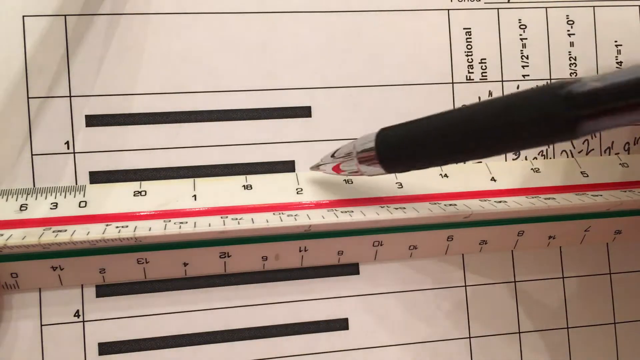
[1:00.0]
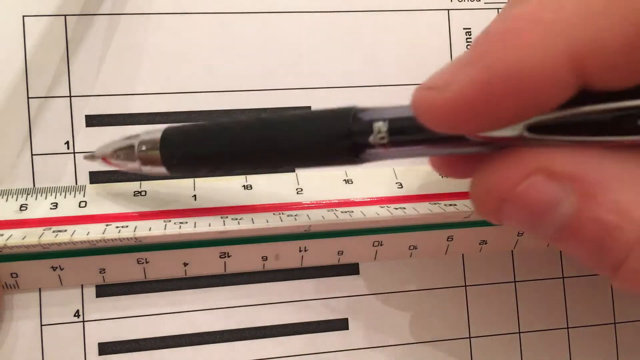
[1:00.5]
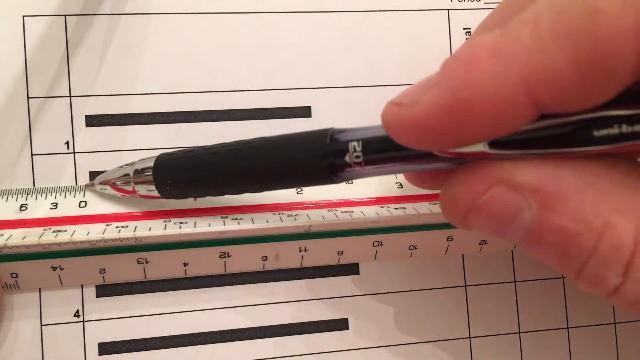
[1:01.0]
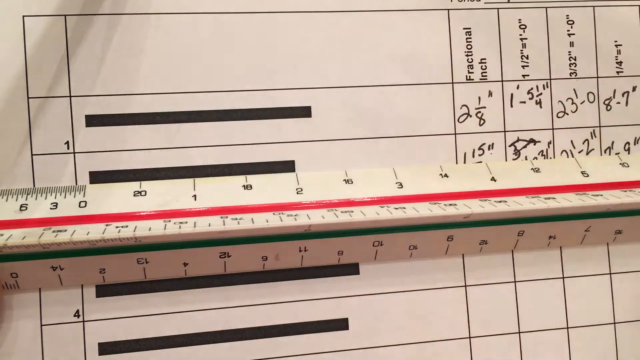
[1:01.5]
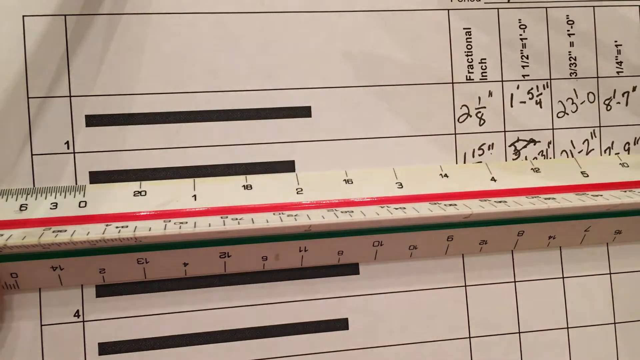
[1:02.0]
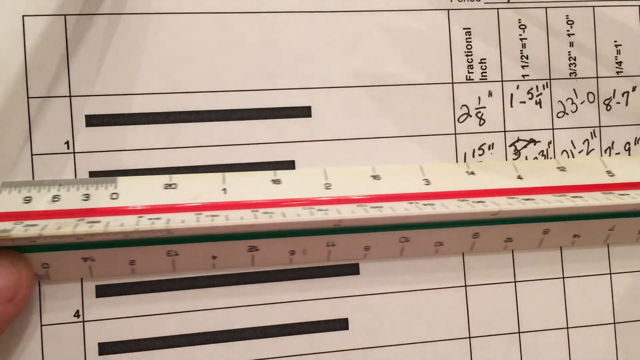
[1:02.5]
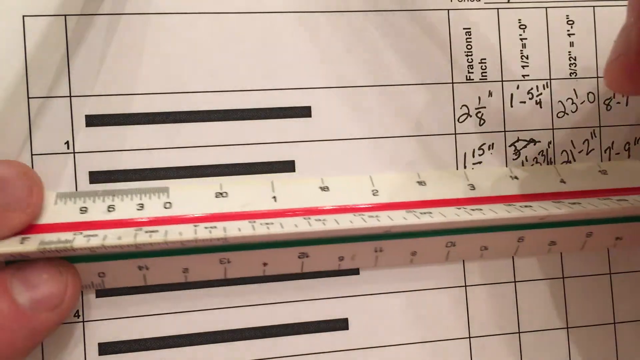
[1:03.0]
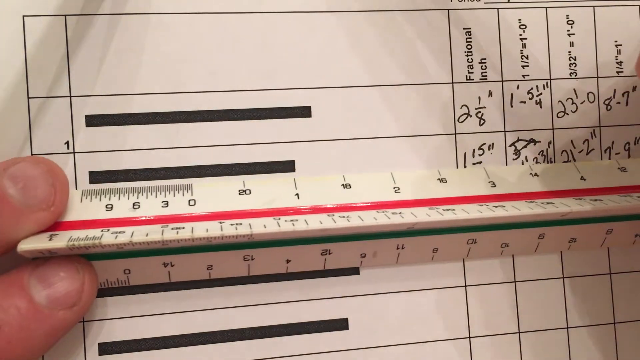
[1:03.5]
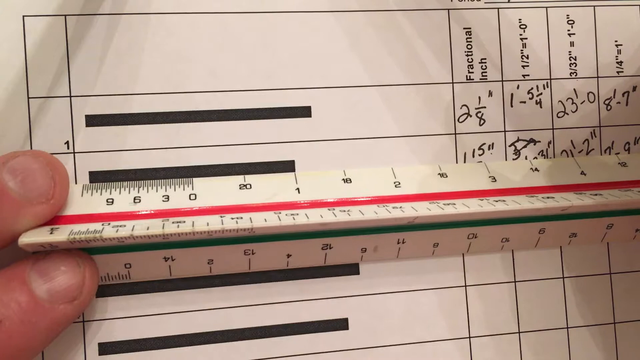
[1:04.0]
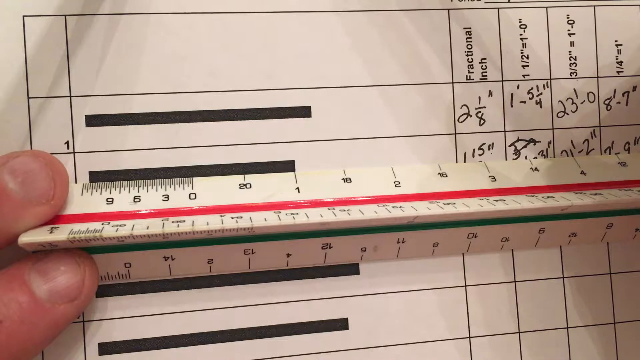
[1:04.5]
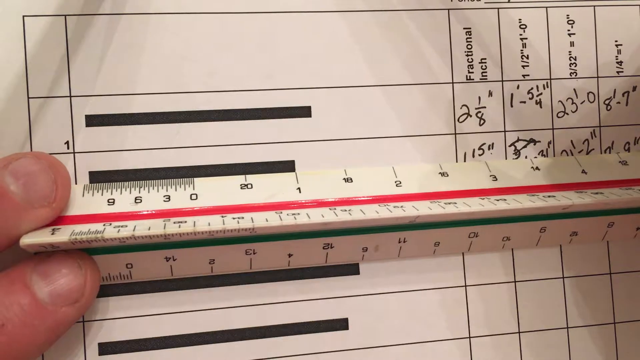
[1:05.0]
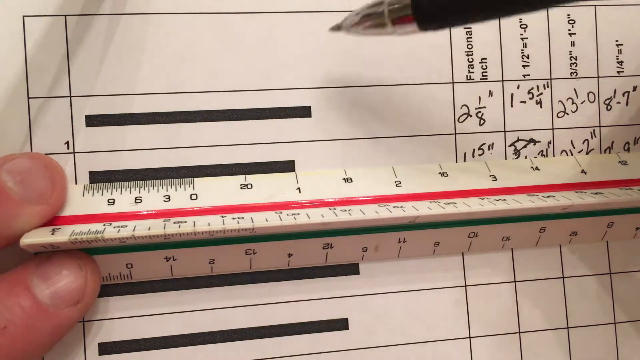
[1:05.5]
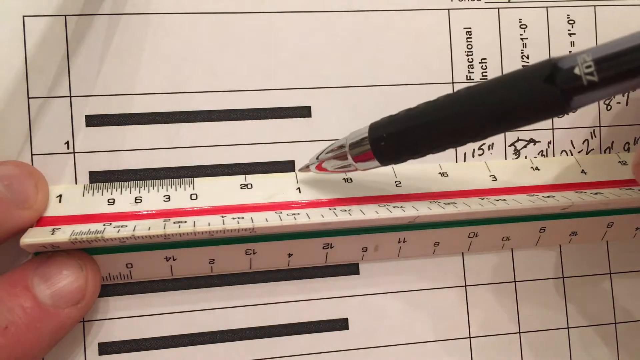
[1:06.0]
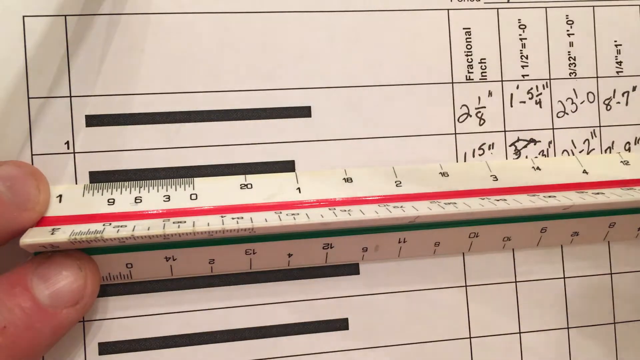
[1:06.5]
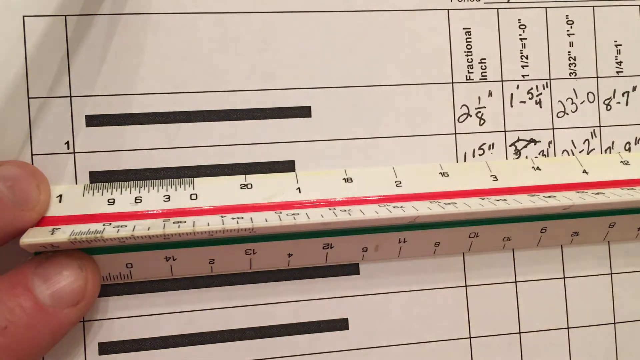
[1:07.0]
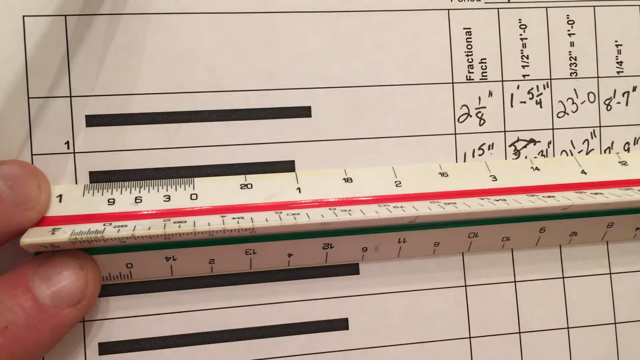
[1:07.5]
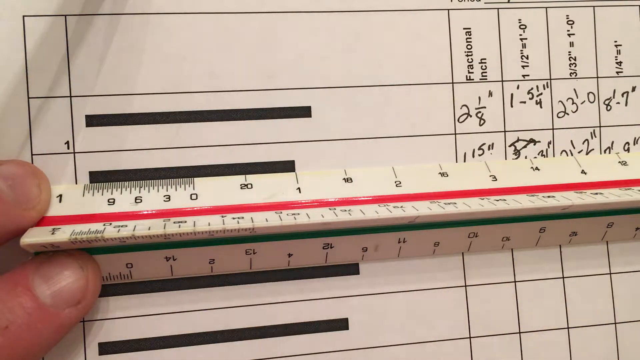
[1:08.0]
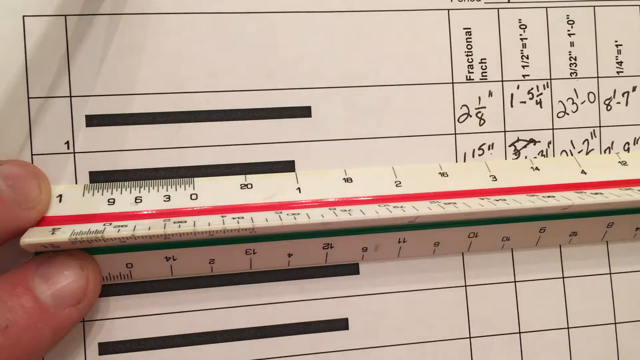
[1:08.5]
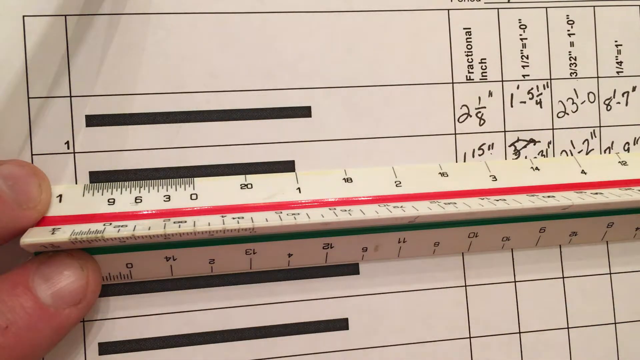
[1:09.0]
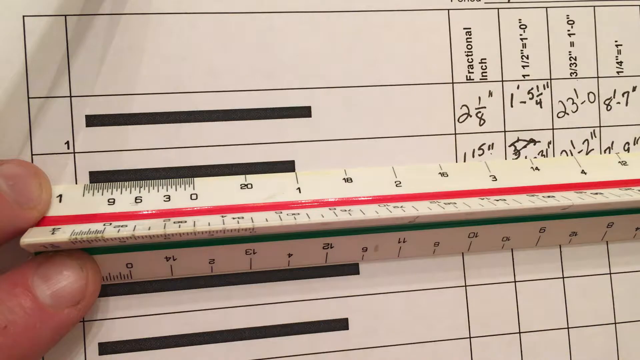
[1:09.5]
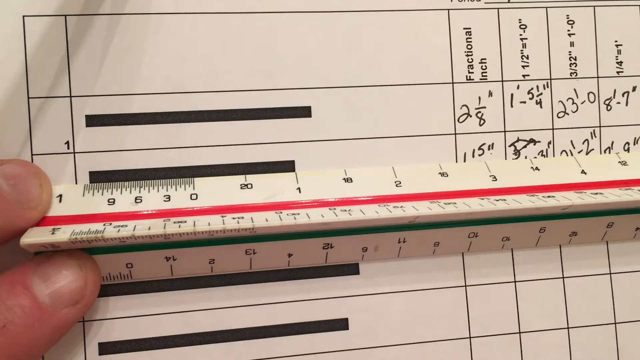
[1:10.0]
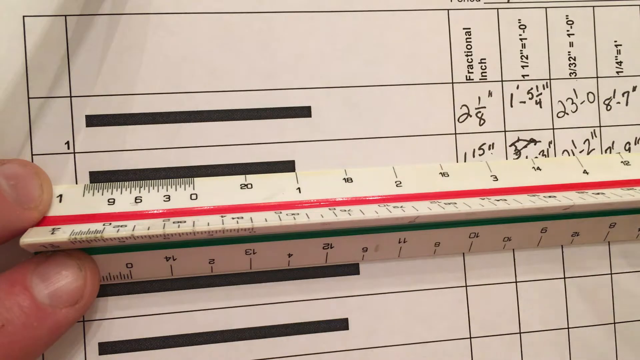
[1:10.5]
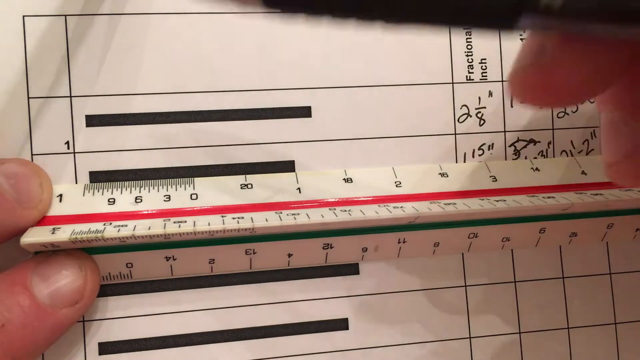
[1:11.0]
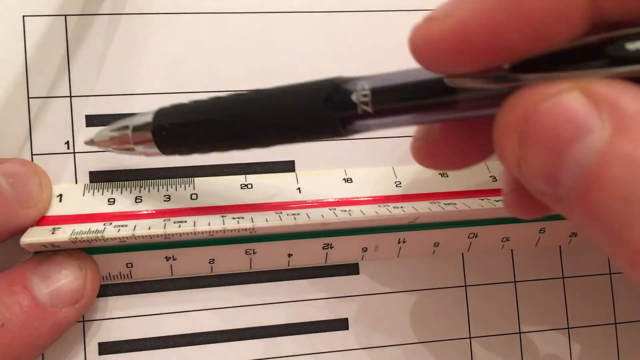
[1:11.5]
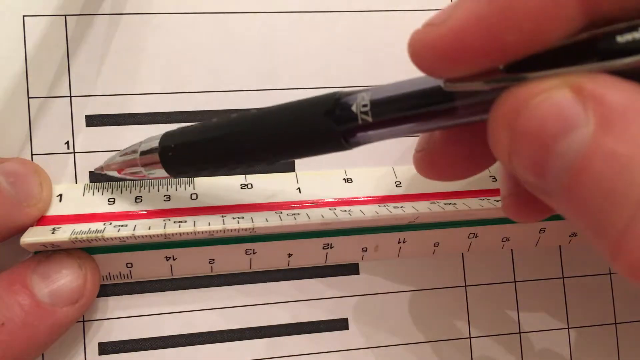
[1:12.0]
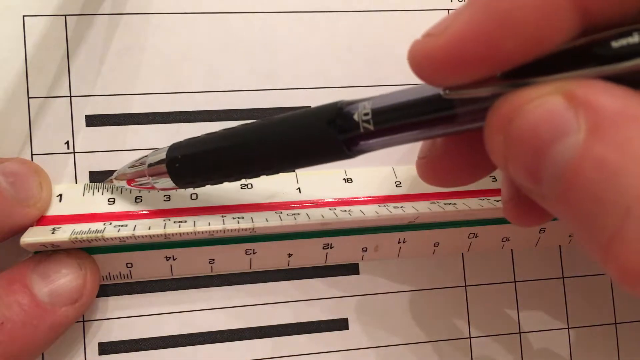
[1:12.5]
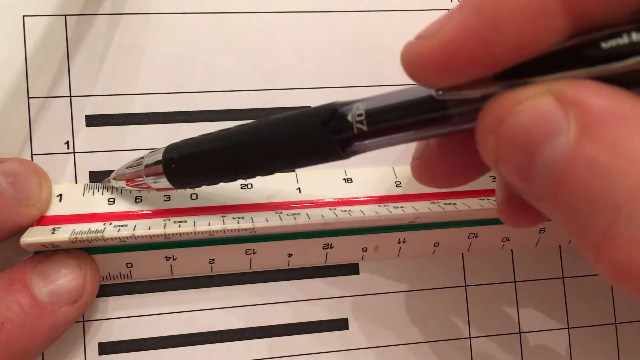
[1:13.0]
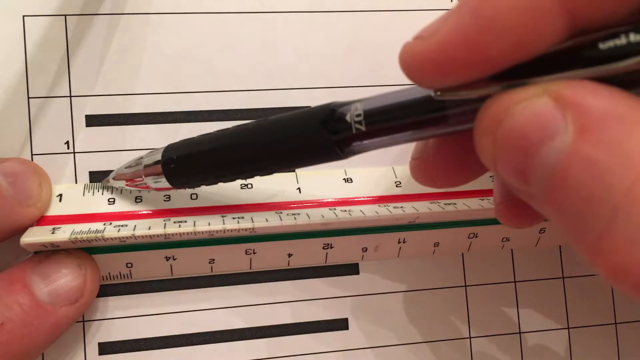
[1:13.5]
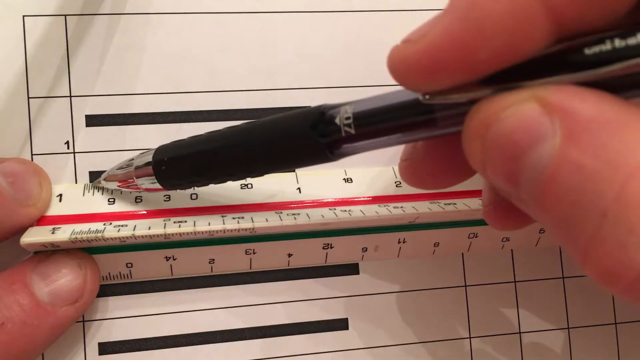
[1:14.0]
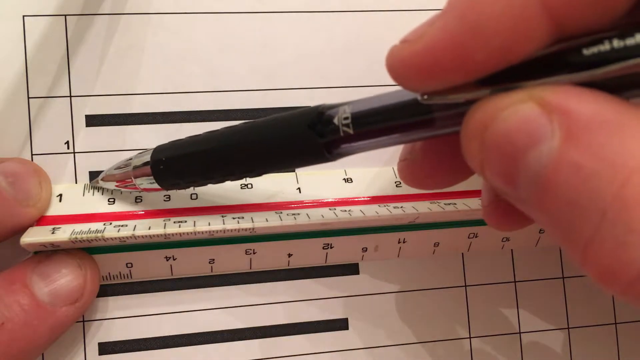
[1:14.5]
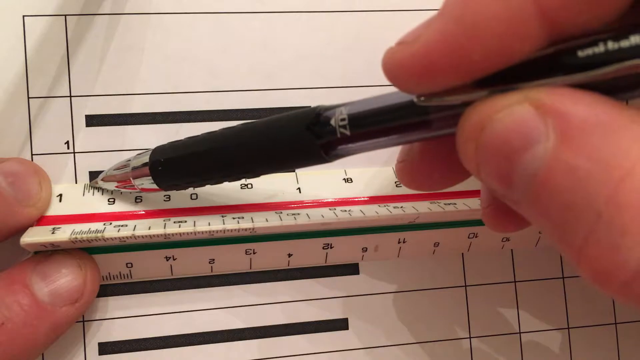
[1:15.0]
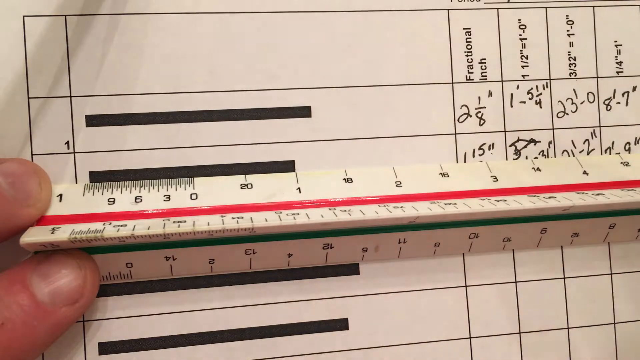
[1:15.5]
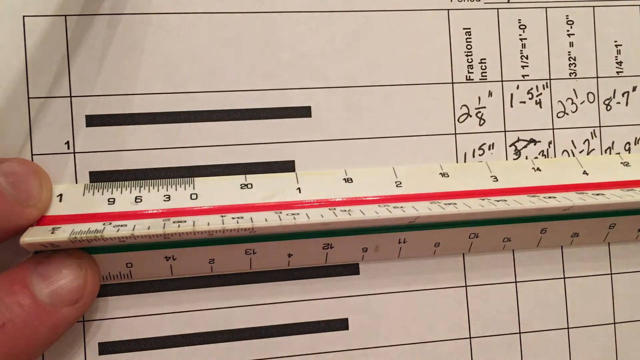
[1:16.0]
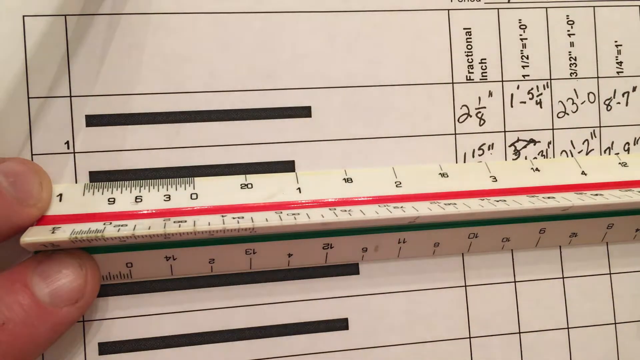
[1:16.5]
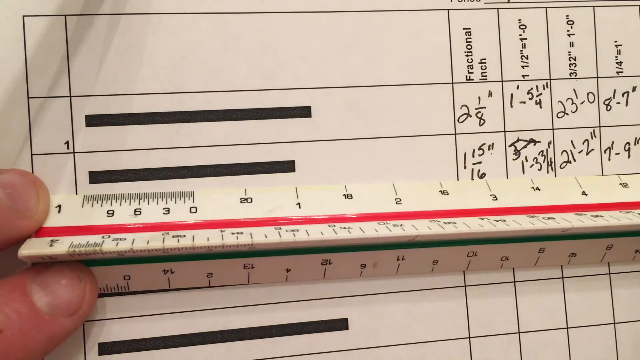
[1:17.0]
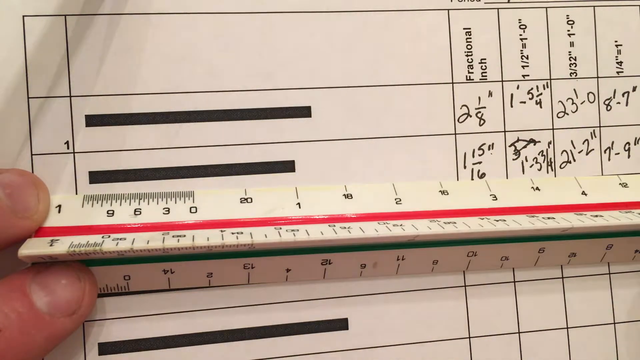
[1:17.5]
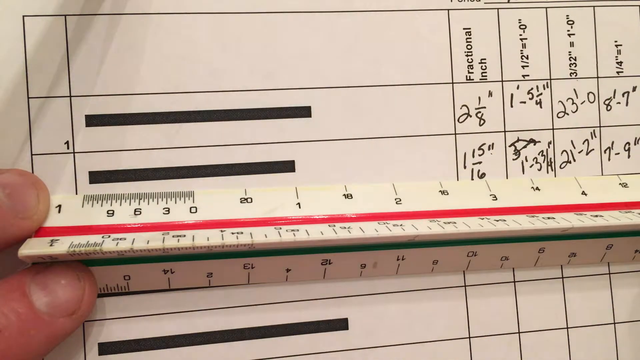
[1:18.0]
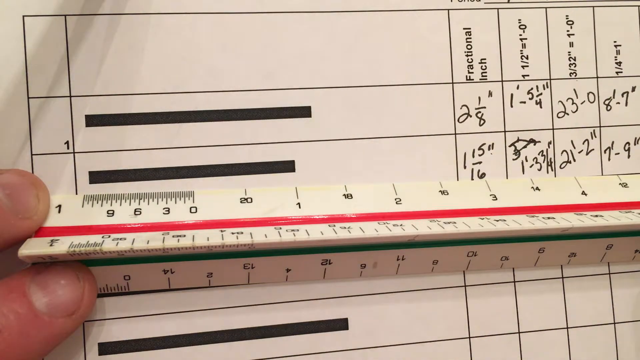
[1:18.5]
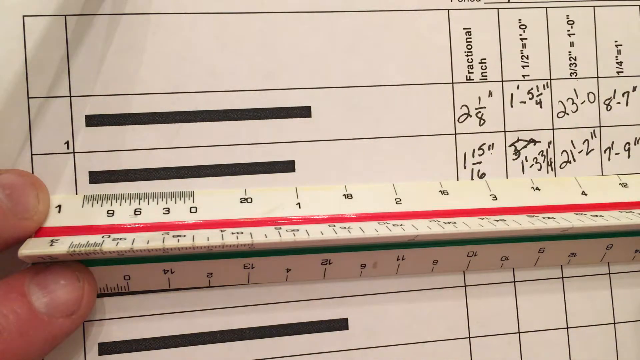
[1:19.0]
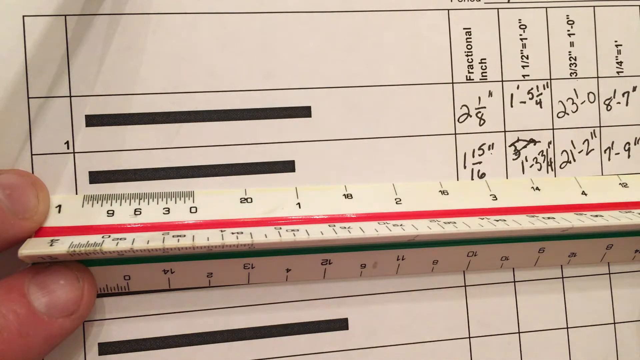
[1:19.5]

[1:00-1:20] The person continues measuring with the ruler, apparently showing how the answer is reached. He first looks at the 1 inch mark, then moves to the smaller section of the ruler, where the measurement turns out to be 1 and 15/16 of an inch, which matches the fractional inch column entry for the second line. The paper also has other columns, which say "1 and a half by 1, negative zero", with their own answers filled in.